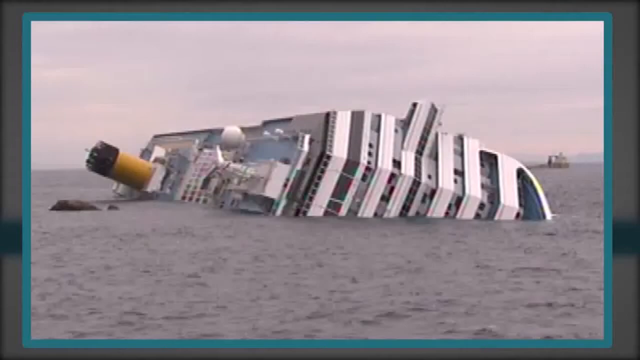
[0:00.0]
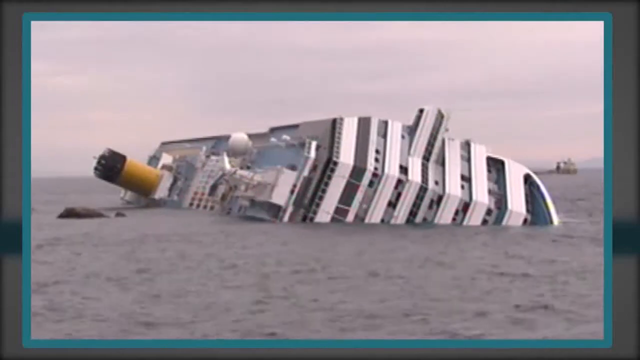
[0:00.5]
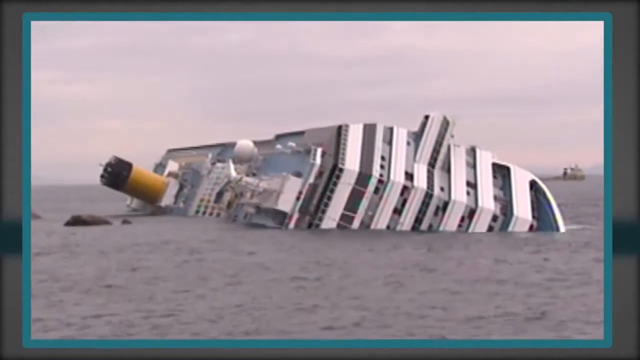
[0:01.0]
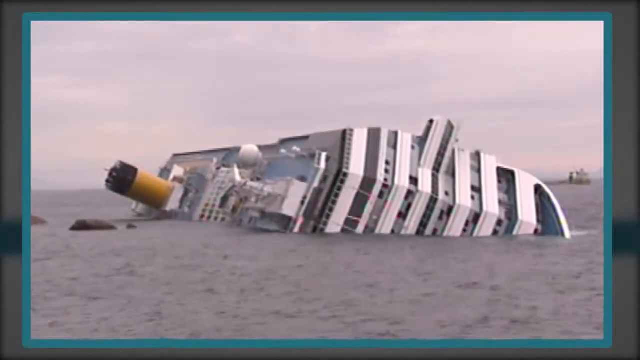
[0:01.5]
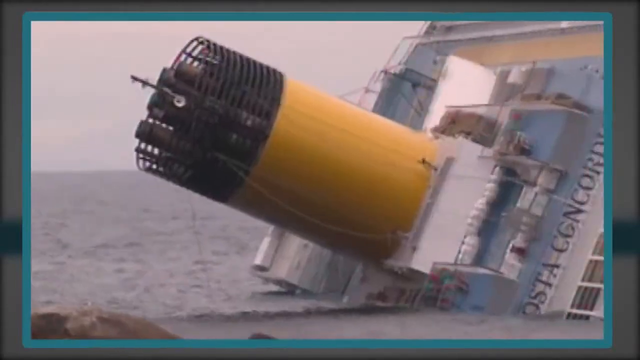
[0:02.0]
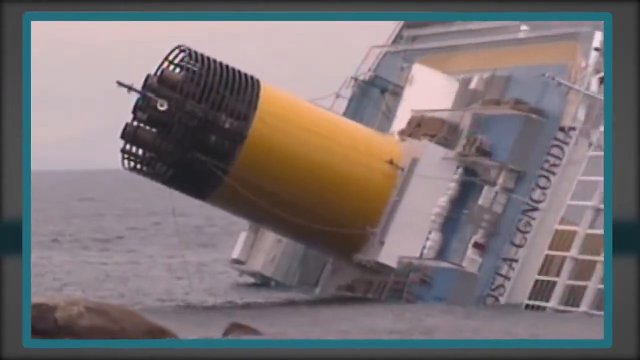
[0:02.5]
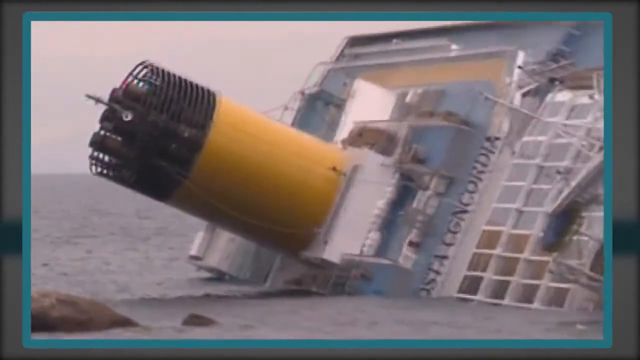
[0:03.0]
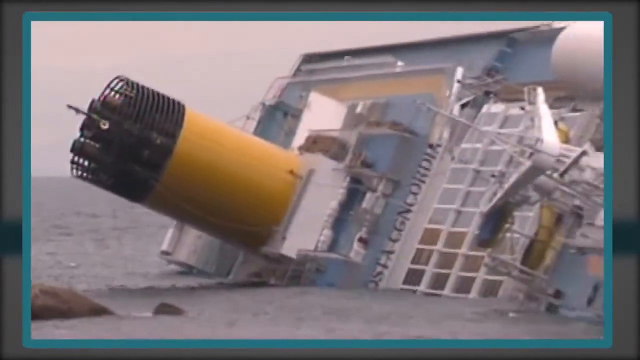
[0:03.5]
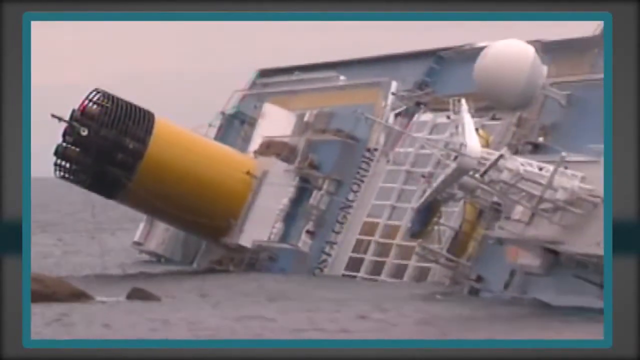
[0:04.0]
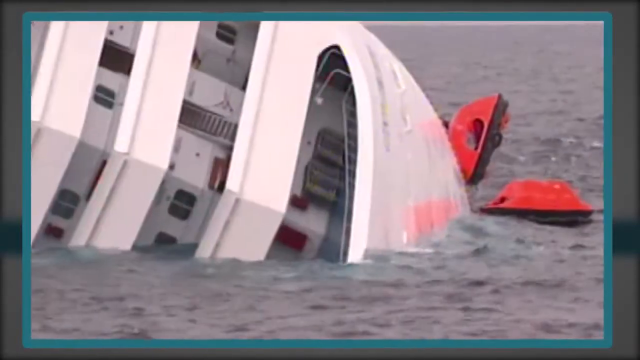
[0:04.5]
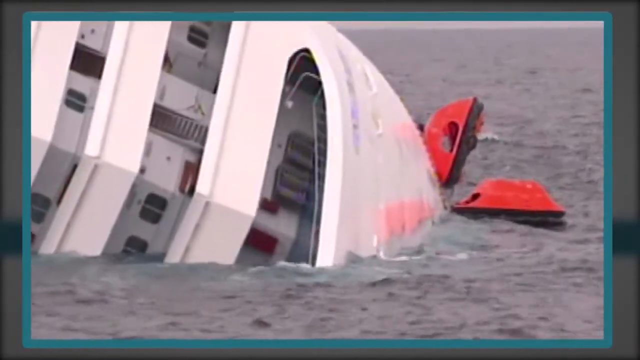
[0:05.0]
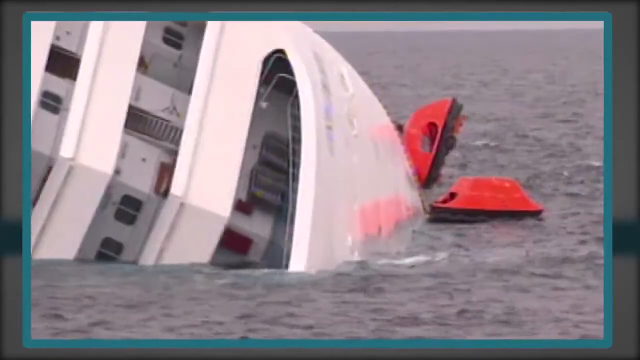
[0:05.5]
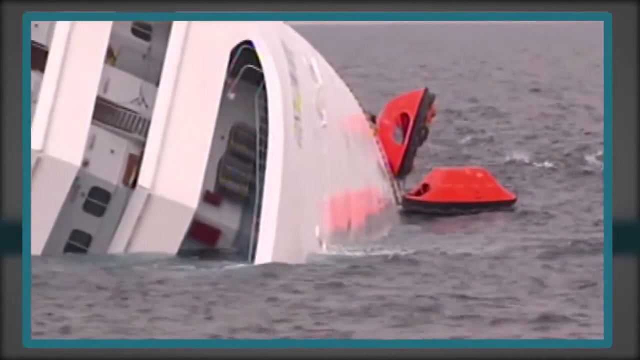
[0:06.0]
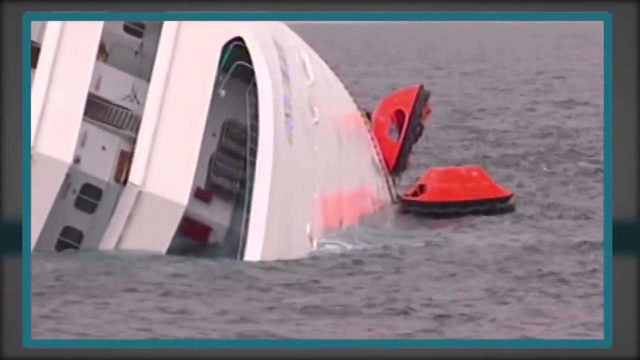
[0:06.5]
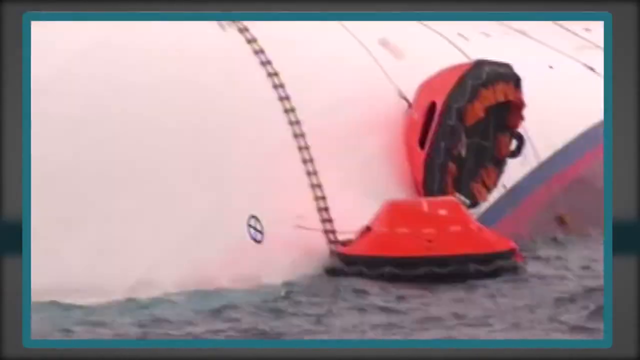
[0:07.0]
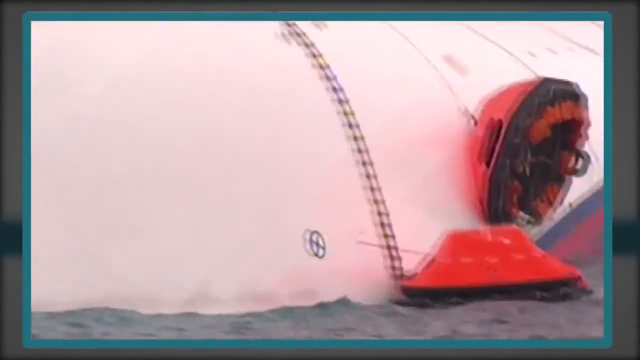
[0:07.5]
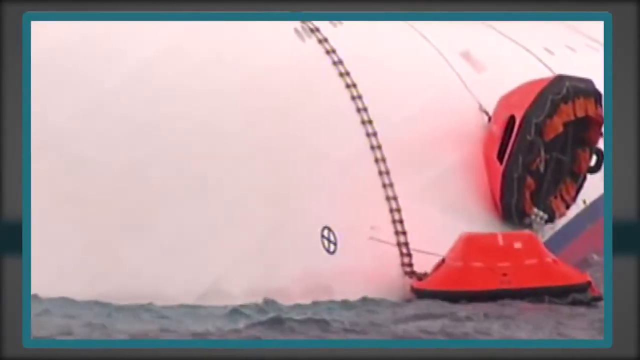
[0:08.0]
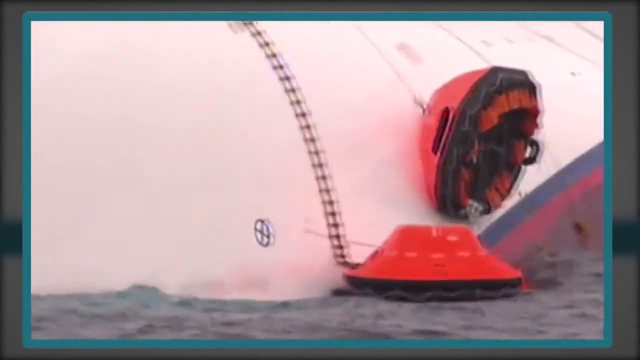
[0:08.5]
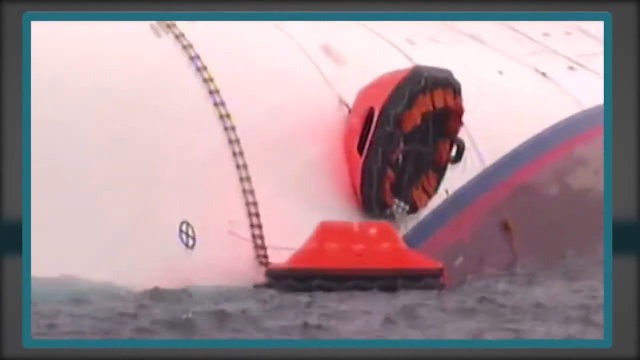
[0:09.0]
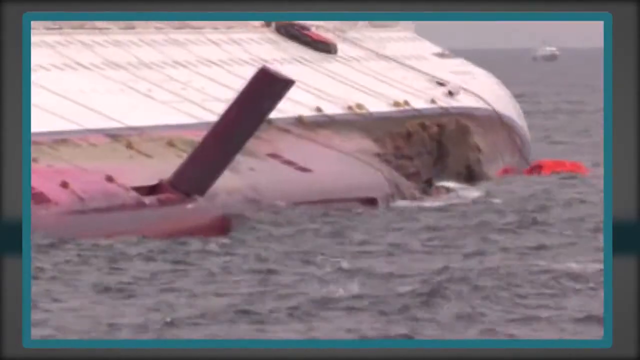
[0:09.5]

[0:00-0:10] A large cruise ship lies turned on its side and looks like it is sinking. A wide view comes first, followed by a couple of close-up shots. The smokestack is still out of the water, and the ship is in the middle of the ocean. In the closer view, a couple of red objects, either lifeboats or some kind of flotation devices, seem to be tethered to the ship. It looks like an overcast day: the water looks kind of gray and the sky is gray. The cruise ship is mostly white with some gray accents. A close-up shows the yellow and black smokestack, then the view switches to the two red flotation devices, which seem to be tethered to what looks like the back of the ship, and the camera pans out to show some of the havoc.